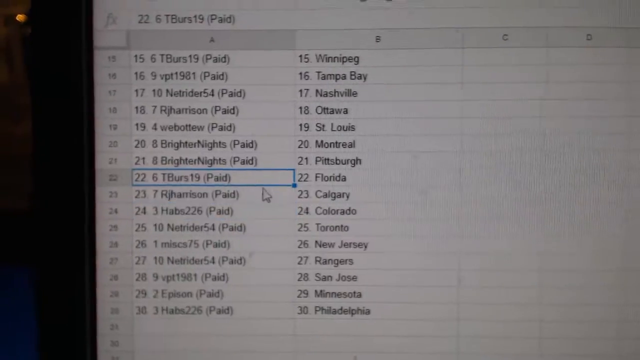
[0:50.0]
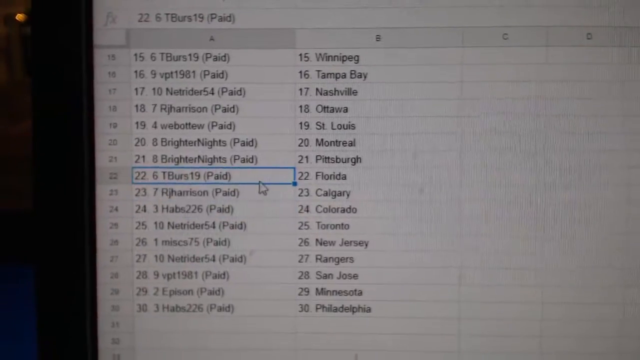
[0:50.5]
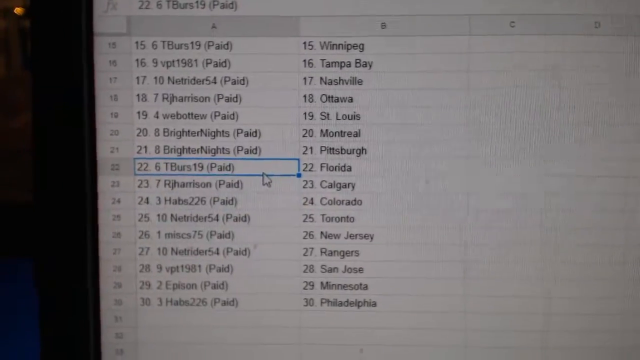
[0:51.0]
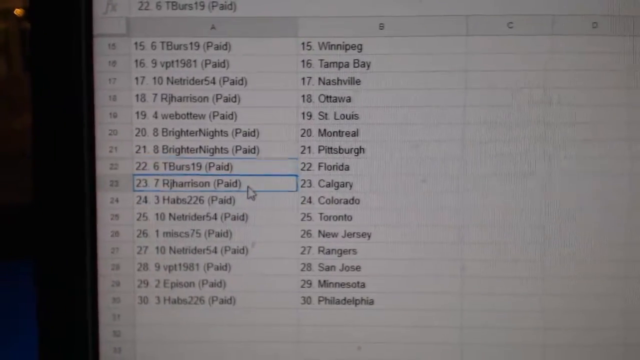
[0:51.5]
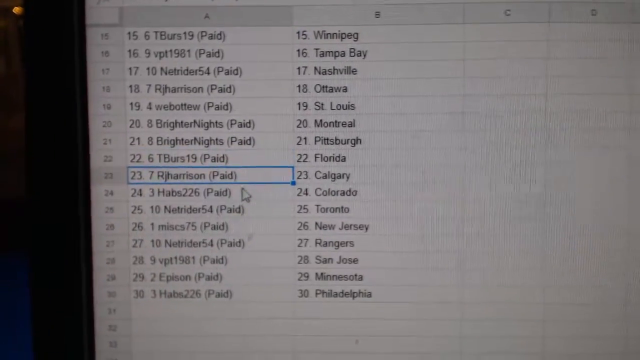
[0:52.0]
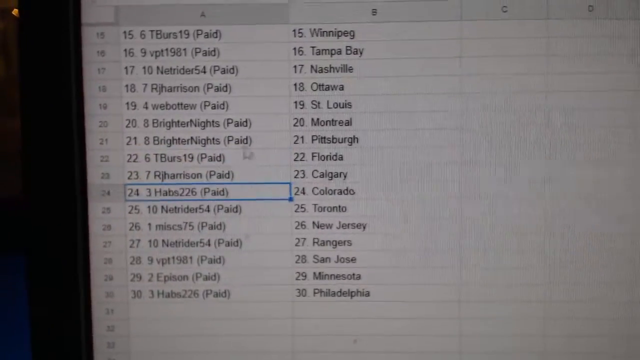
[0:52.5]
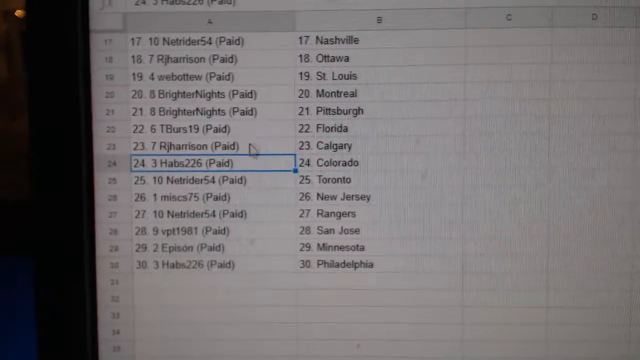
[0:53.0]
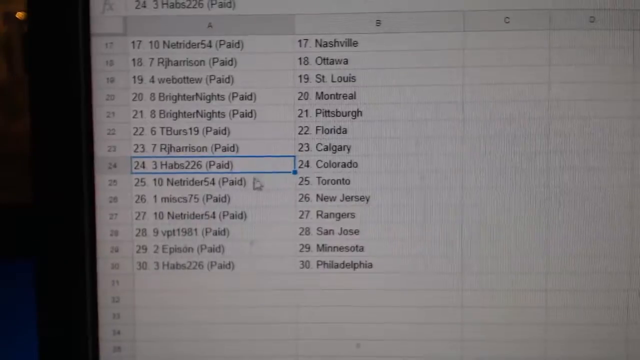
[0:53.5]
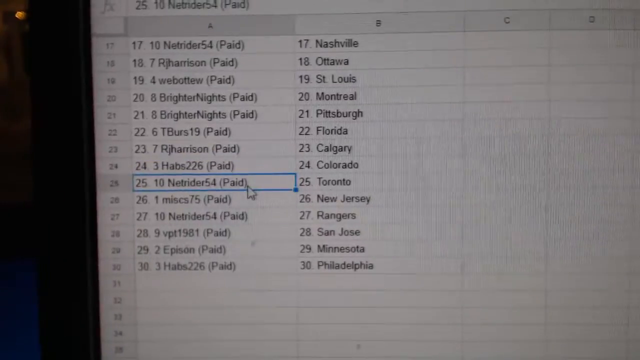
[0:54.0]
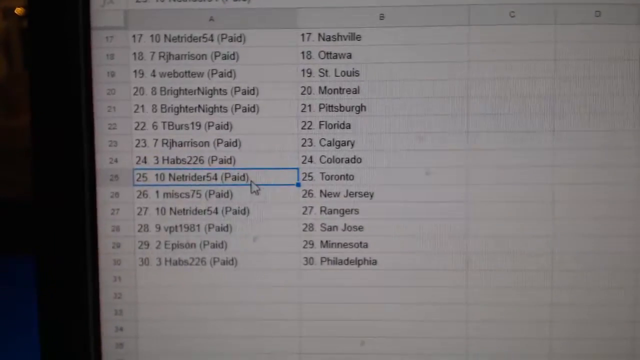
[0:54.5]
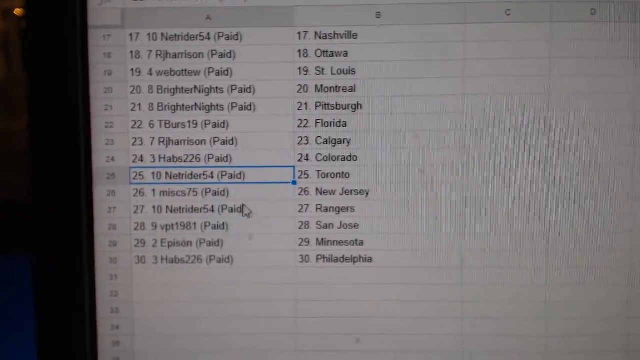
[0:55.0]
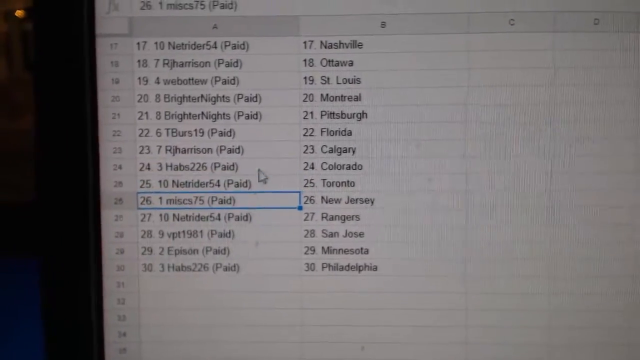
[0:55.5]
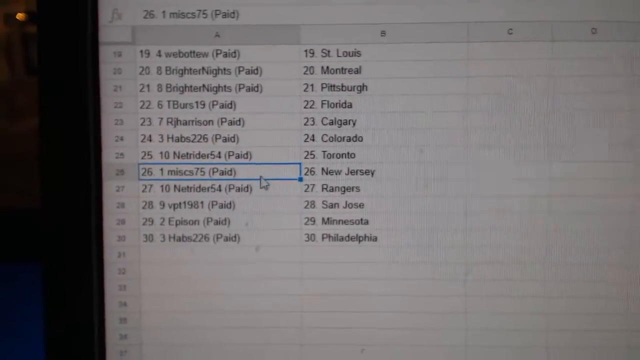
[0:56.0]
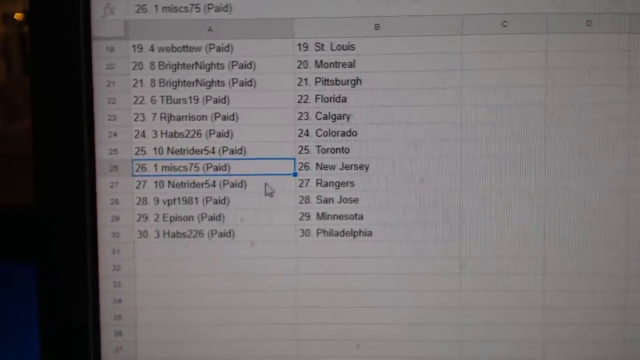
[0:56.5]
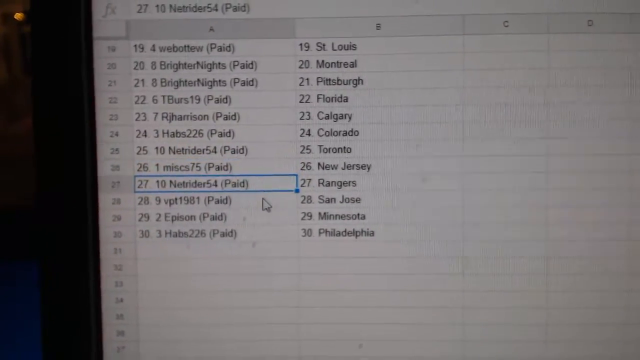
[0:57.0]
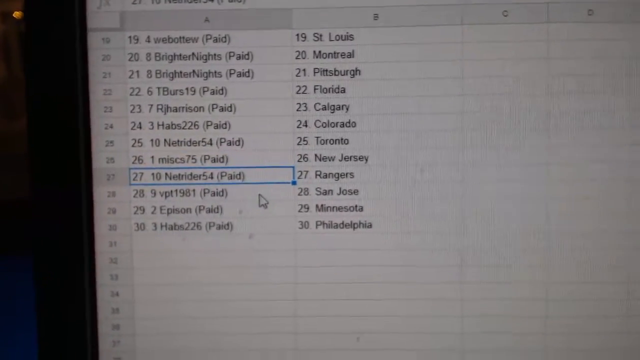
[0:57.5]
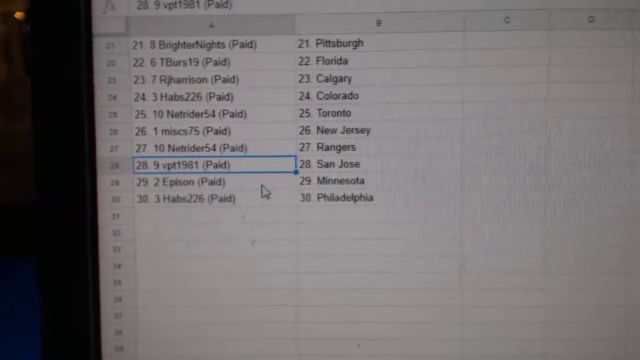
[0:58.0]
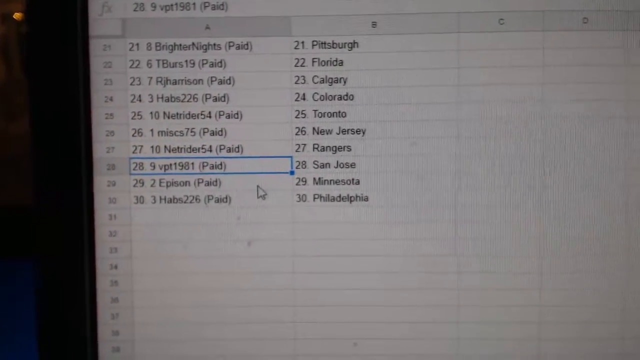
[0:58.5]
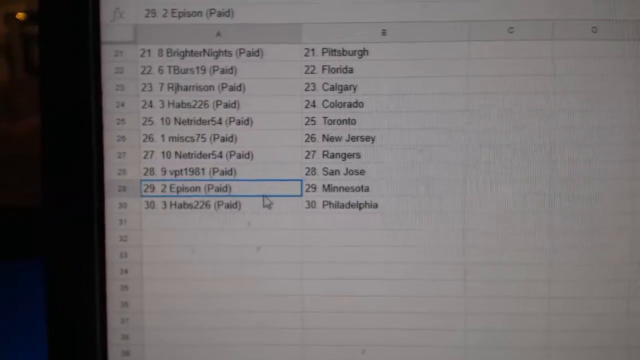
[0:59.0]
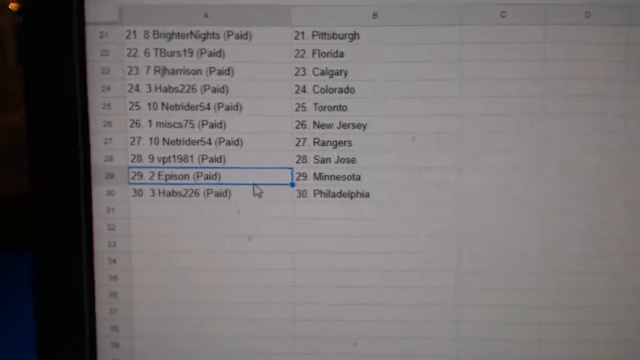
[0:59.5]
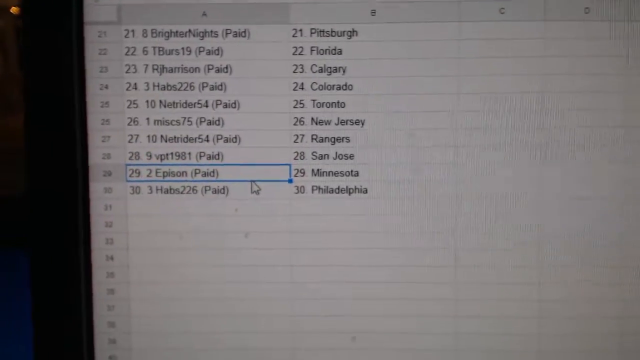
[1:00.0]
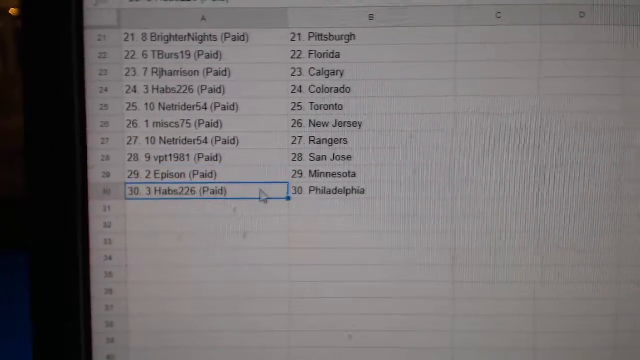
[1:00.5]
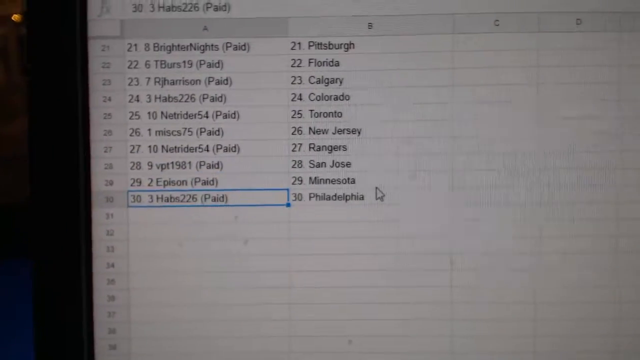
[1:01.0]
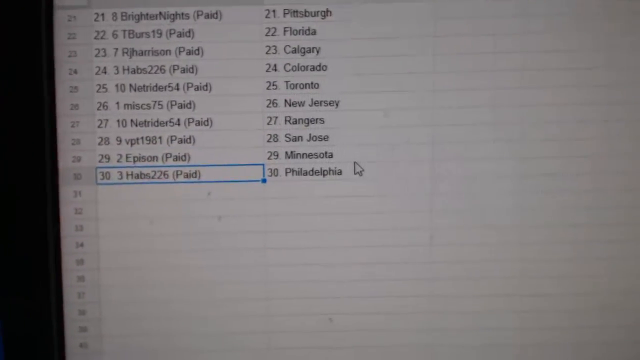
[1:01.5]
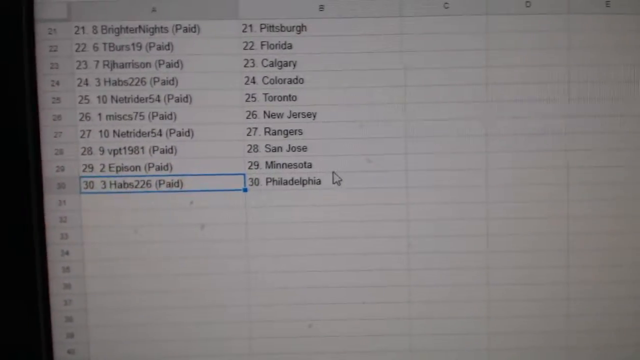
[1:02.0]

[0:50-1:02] The user appears to be clicking on some of the different options in column one, into which sequences of letters and numbers from the random list generator have been copied and pasted. Some entries are words, such as entries 20 and 21, which say "Brighter Nights"; others are basically random letters and numbers. Some almost look like names, such as one that says "R.J. Harrison," possibly usernames of some kind. Column B still has the names of states and cities, which seem to correlate with sports teams.